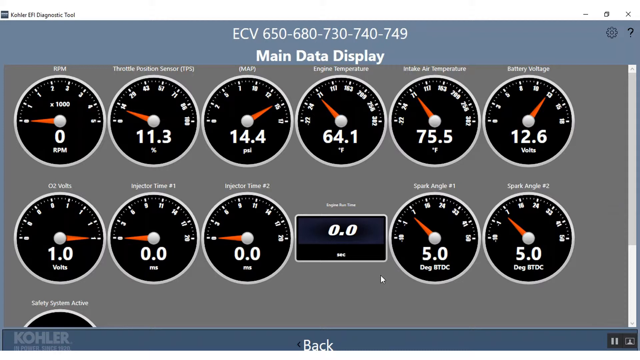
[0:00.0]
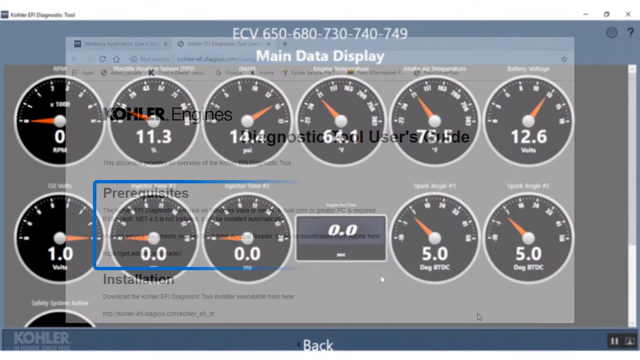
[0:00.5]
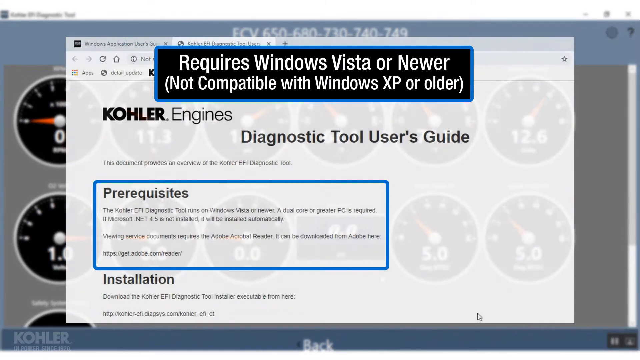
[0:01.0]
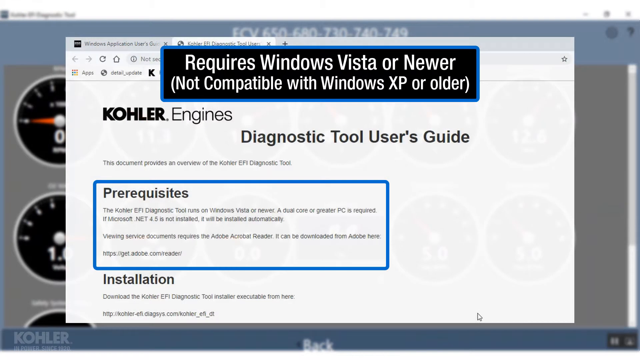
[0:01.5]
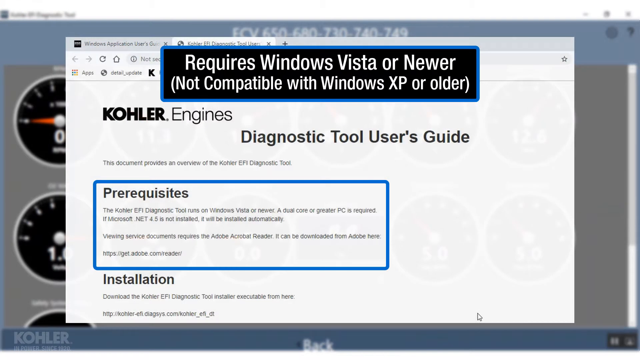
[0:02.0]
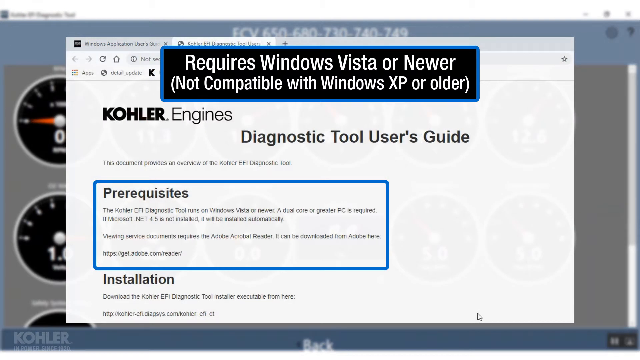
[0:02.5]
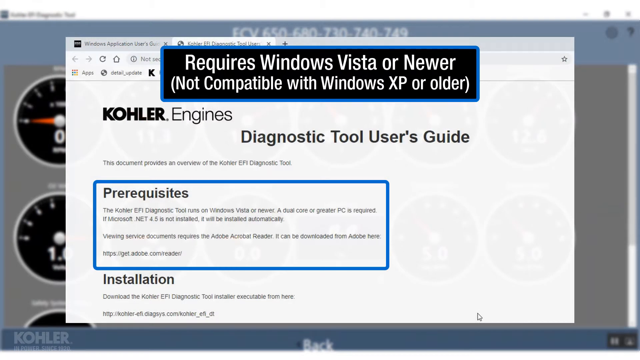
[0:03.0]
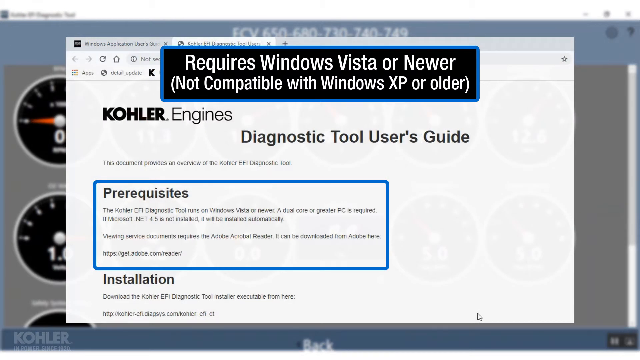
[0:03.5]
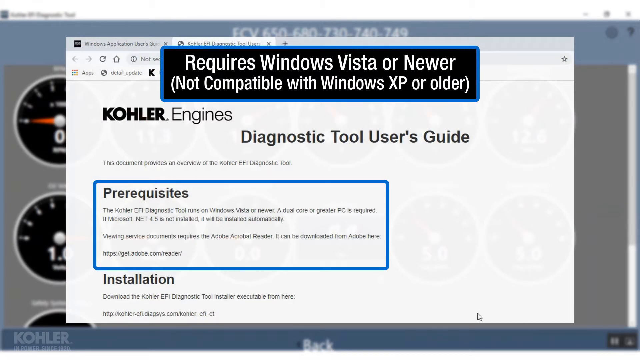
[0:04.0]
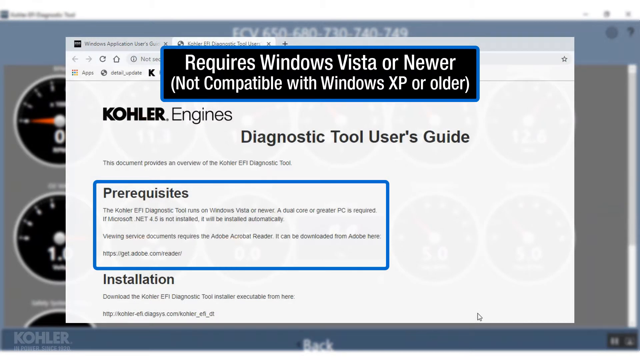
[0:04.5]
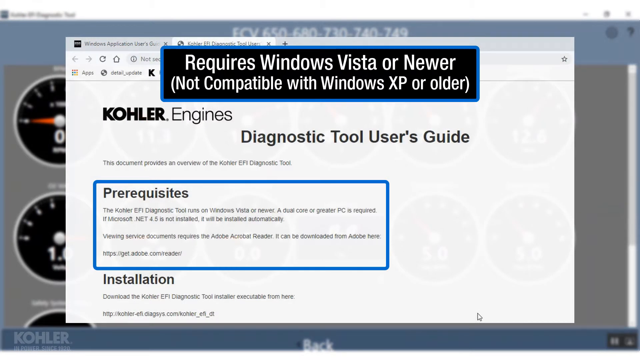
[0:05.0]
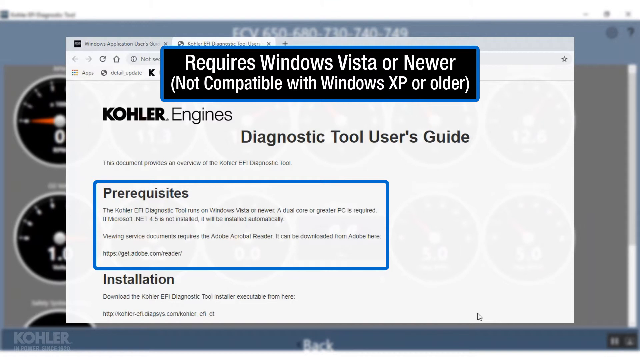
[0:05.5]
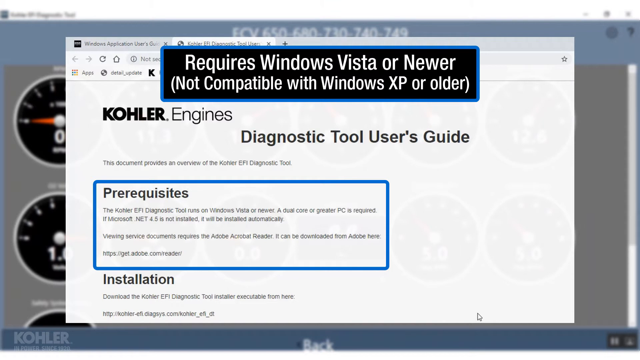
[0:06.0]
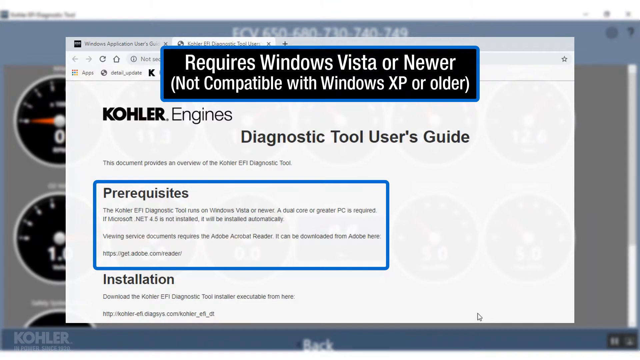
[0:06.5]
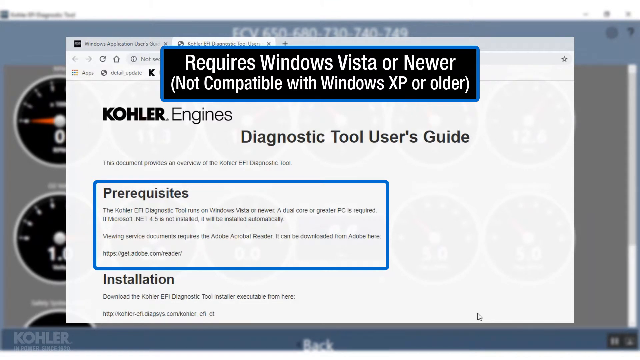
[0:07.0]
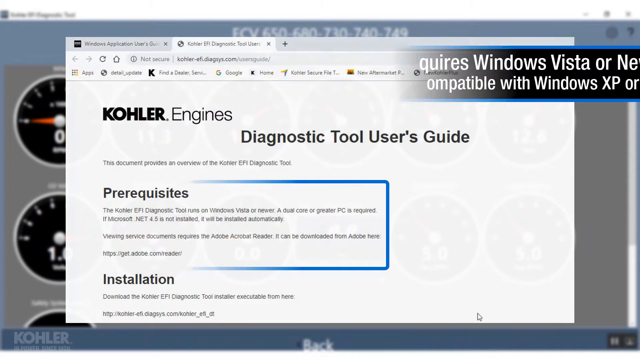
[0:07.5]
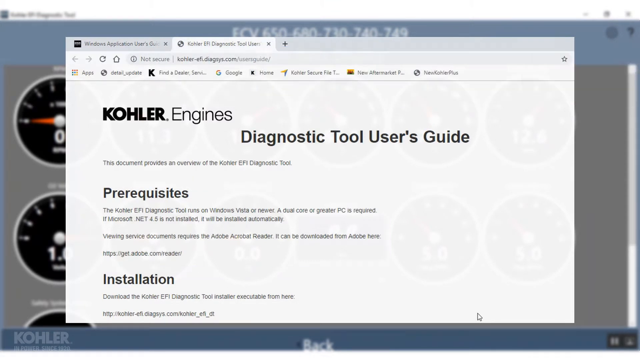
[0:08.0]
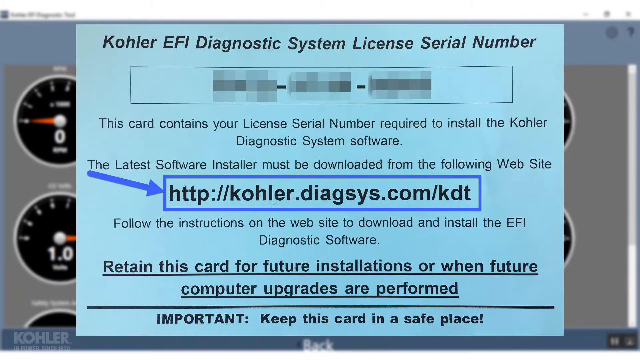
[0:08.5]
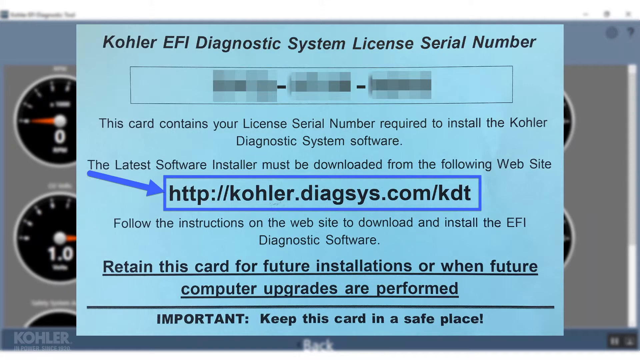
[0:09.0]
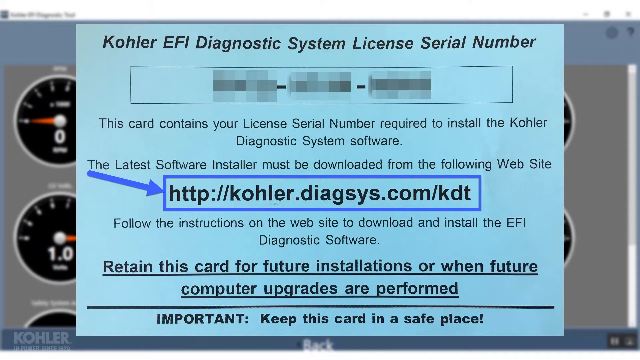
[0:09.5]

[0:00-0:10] The video is about KOHLER engines, opening on a "Diagnostic Tool User's Guide" with sections for prerequisites and installations. A main data display that looks like a vehicle dashboard appears as an introduction. Instructions name the website to use to access the site, and there are instructions on the website to download and install the EFI diagnostics software. Further instructions say to use this card for future installation and when future computer applications are performed.